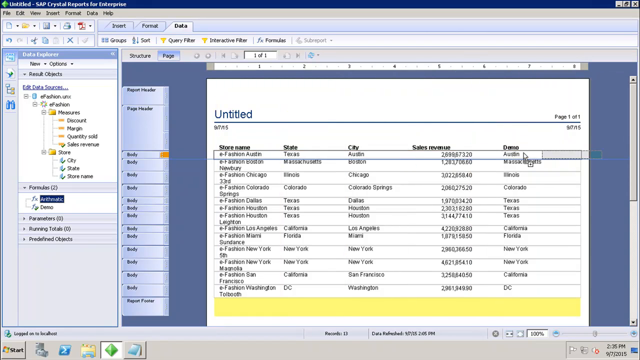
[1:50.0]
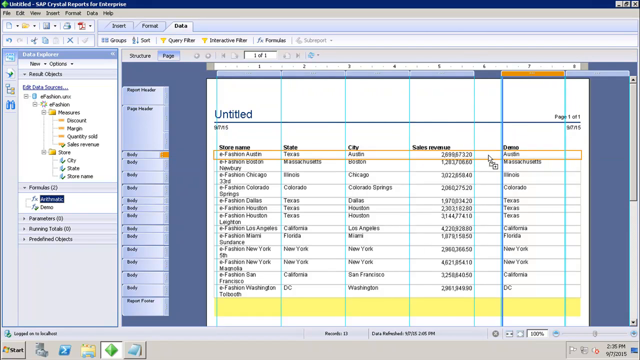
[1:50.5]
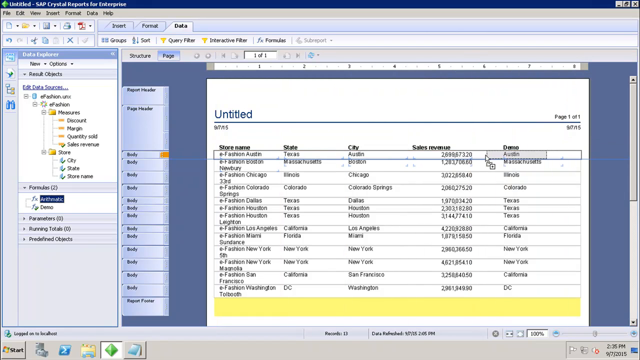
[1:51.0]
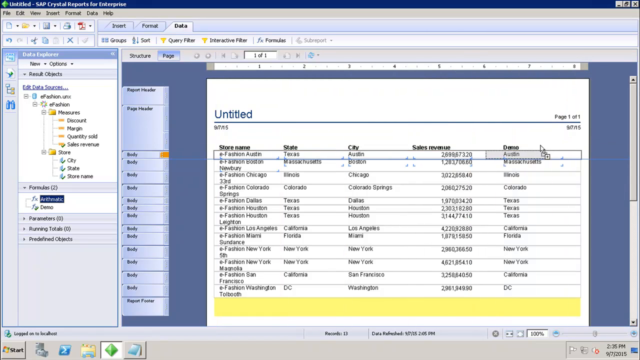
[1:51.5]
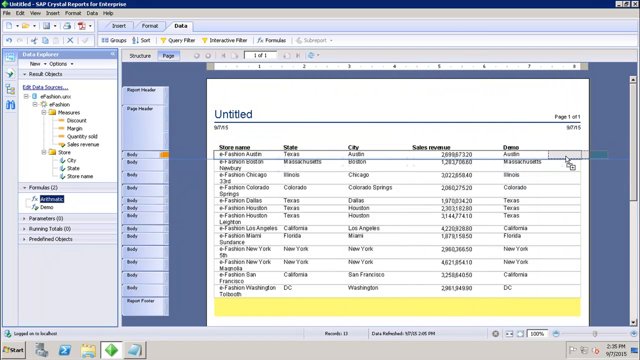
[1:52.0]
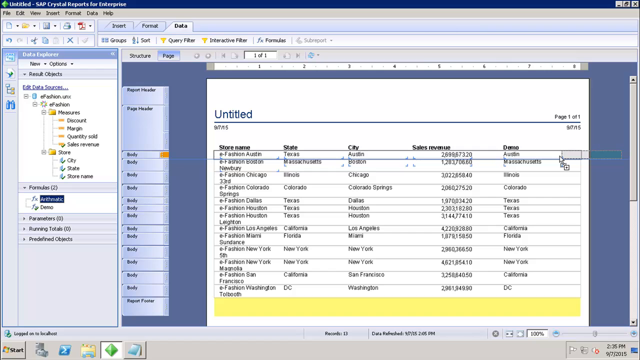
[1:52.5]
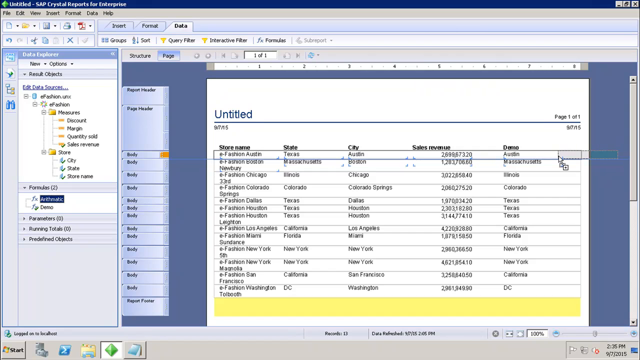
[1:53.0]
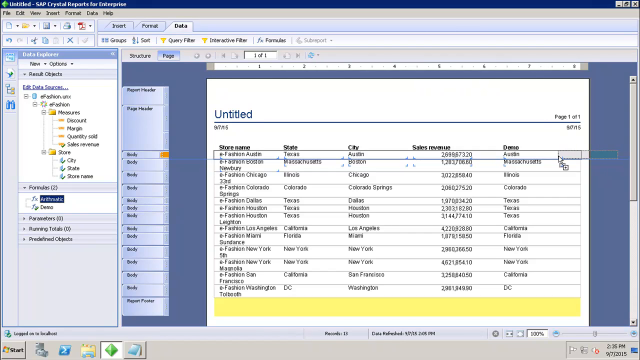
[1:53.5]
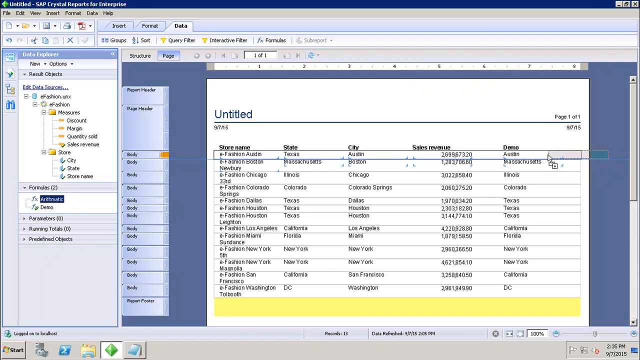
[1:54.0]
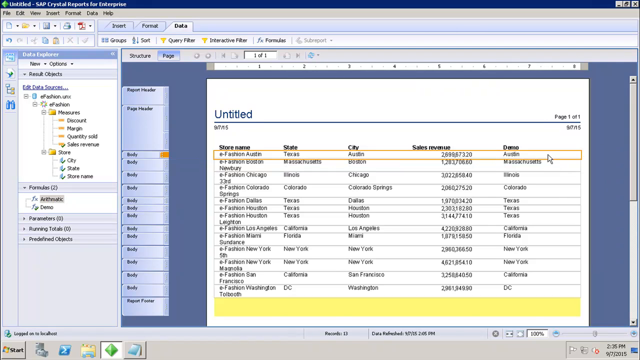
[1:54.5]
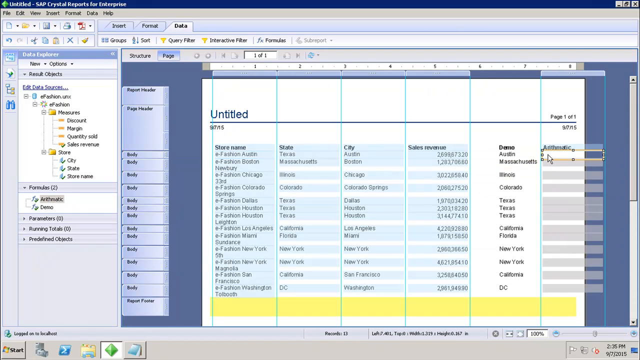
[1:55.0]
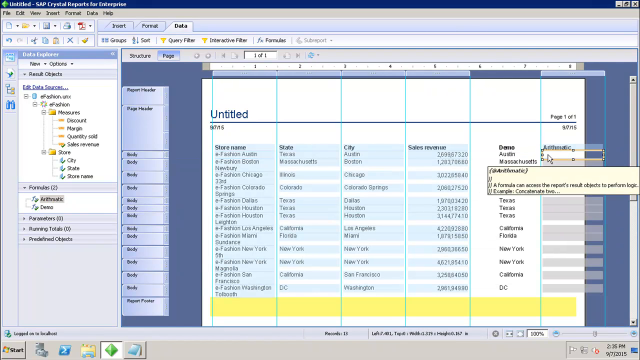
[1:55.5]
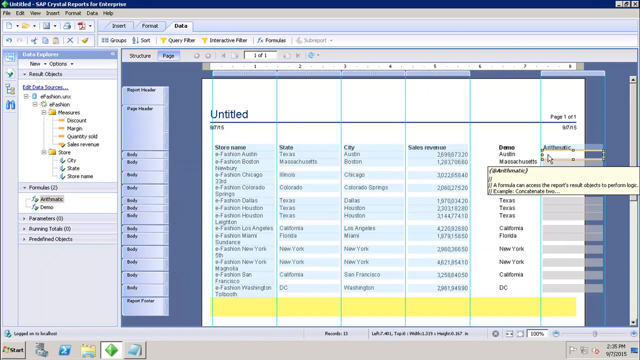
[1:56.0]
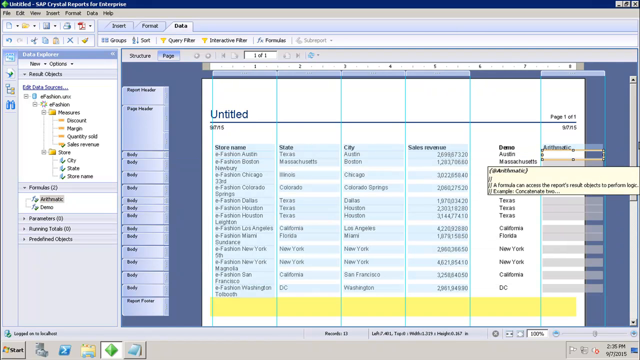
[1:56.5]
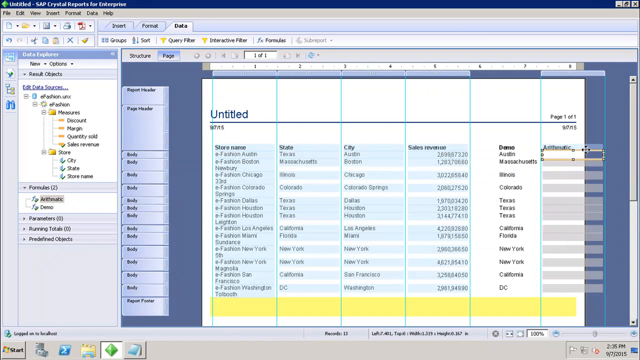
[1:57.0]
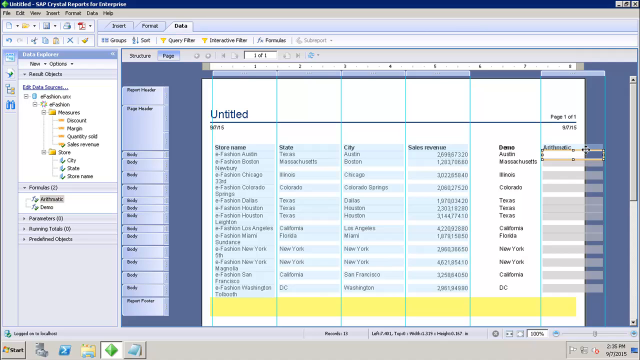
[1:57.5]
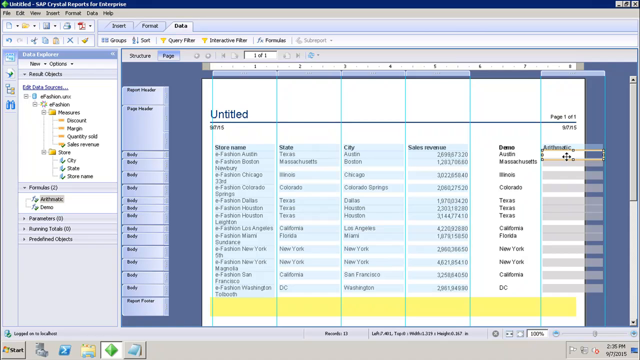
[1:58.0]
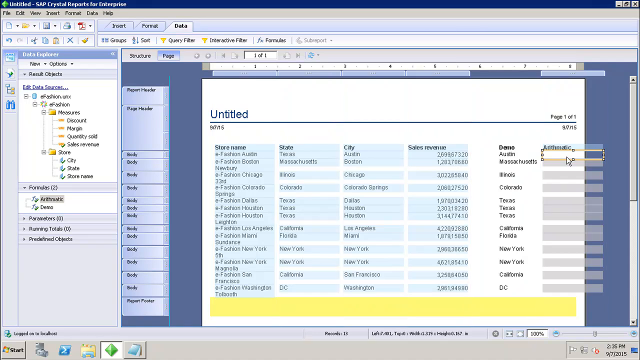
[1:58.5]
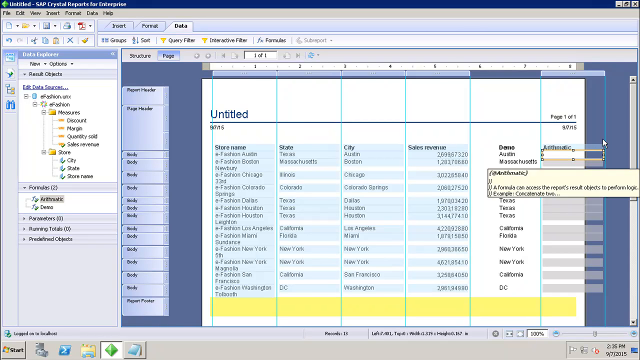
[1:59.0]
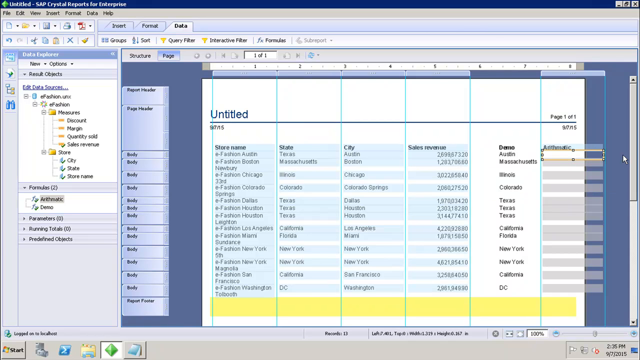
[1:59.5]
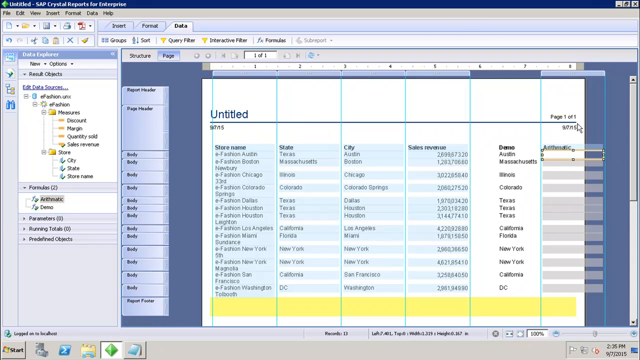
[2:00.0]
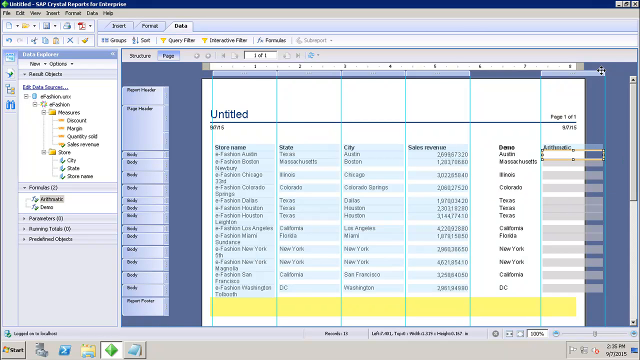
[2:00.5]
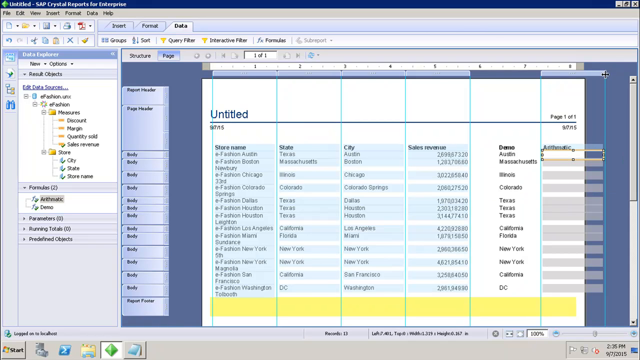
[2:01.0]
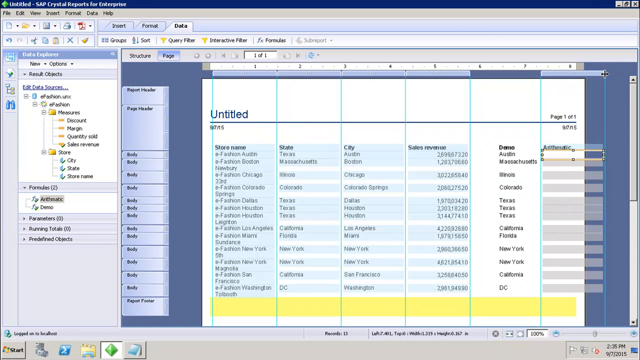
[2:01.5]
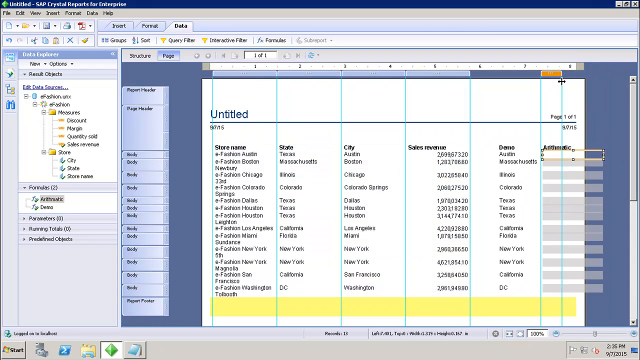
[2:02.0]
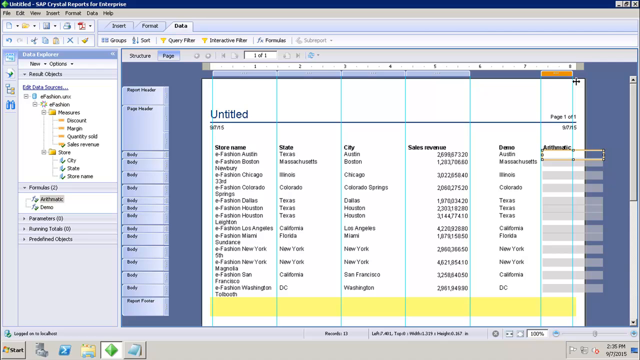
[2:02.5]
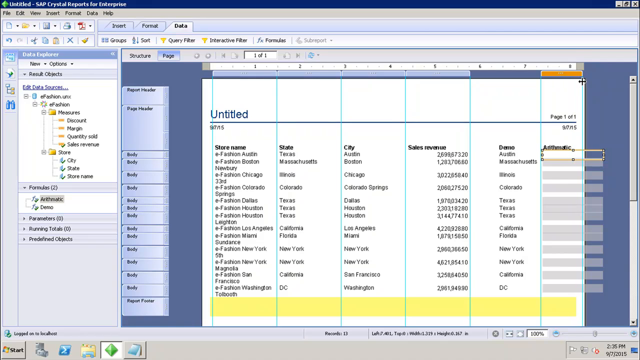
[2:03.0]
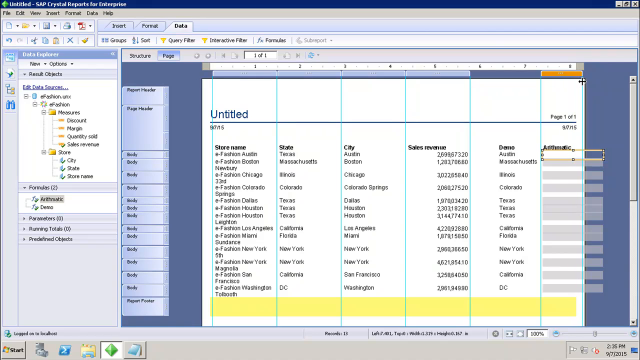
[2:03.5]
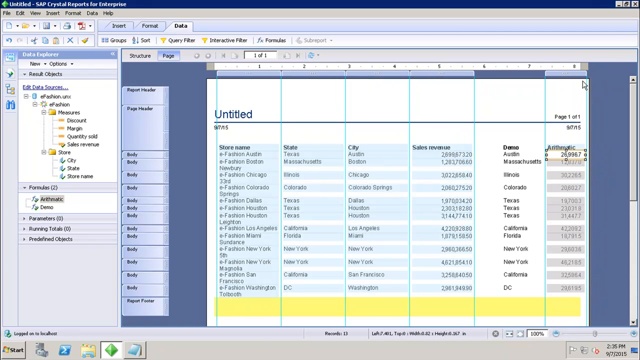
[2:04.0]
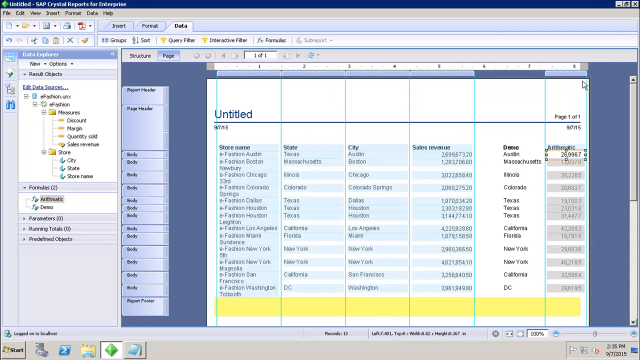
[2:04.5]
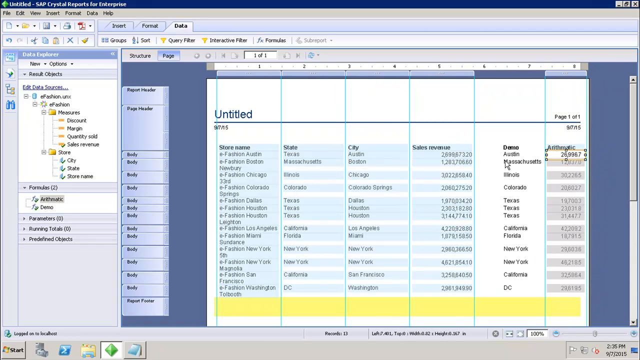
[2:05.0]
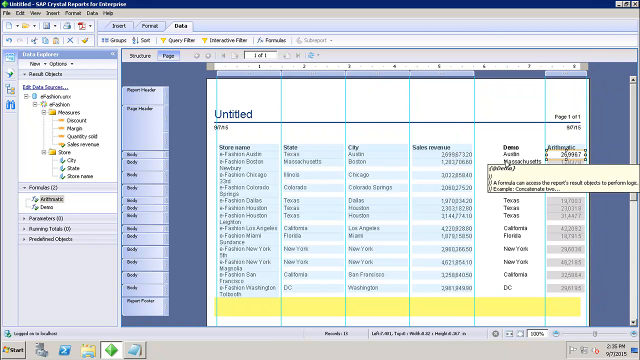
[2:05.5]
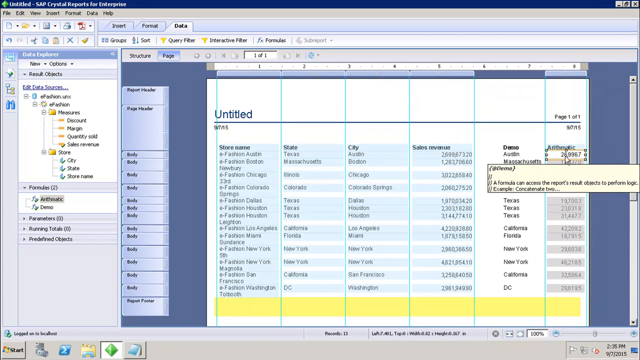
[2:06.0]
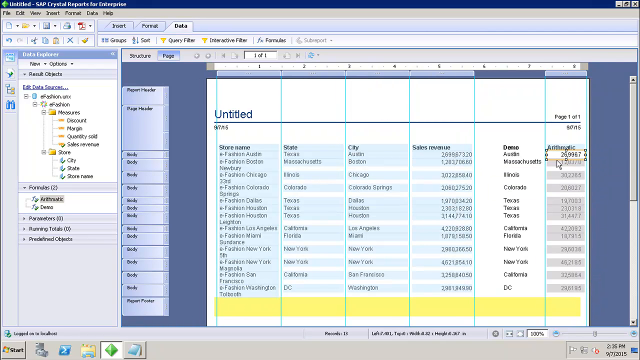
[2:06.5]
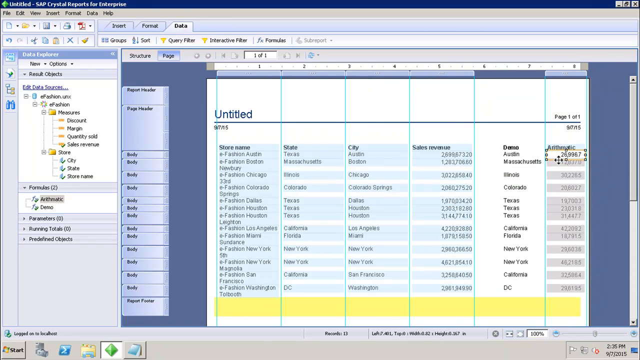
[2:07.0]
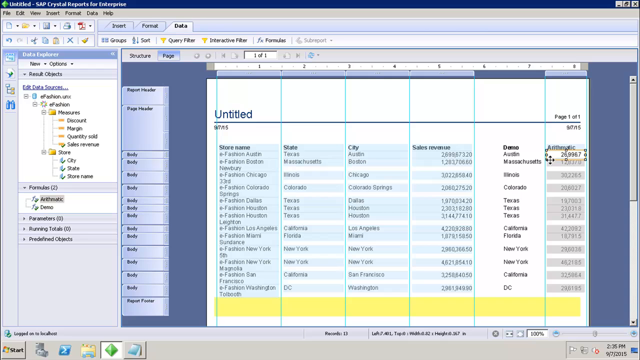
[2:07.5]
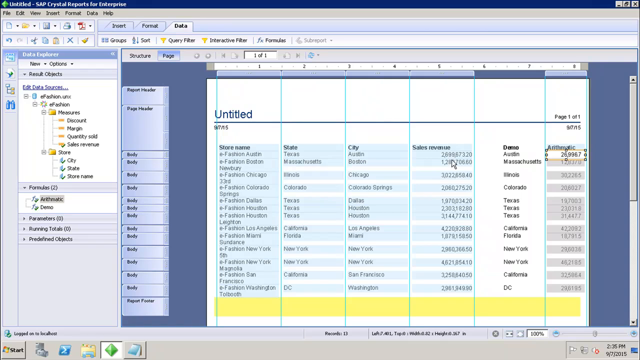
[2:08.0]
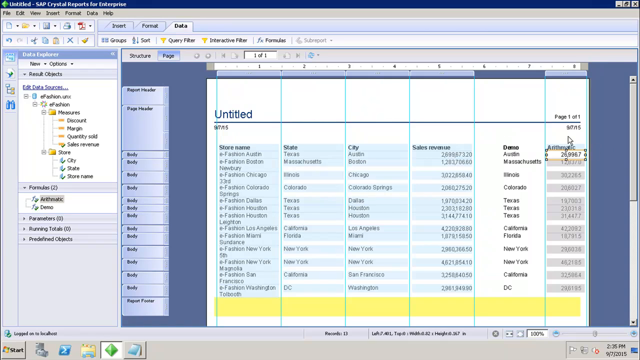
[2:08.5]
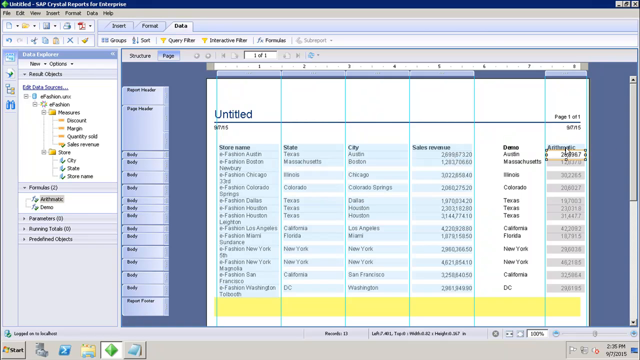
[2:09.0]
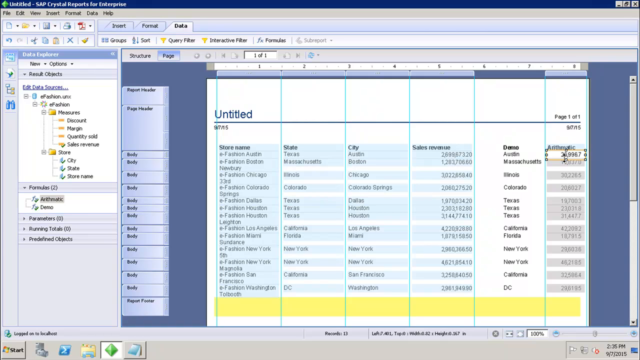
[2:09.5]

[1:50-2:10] Still in the untitled document, the person seems to be trying to expand the first line and adds a number of lines to it, apparently organizing the table with columns for store name, state, city, sales revenue, an unreadable word, and what seems to be arithmetic. As they adjust it, lines pop up, mostly aqua in color. It looks like they may be trying to add another row or column. They seem to be working on the first line, which apparently reads "eFashion Austin, Texas," with Austin as the city. The sales revenue in the next column cannot be read.